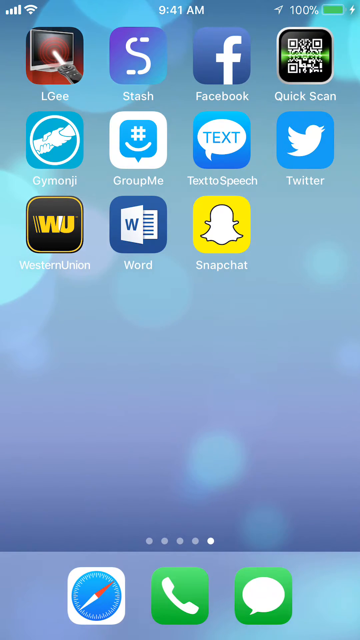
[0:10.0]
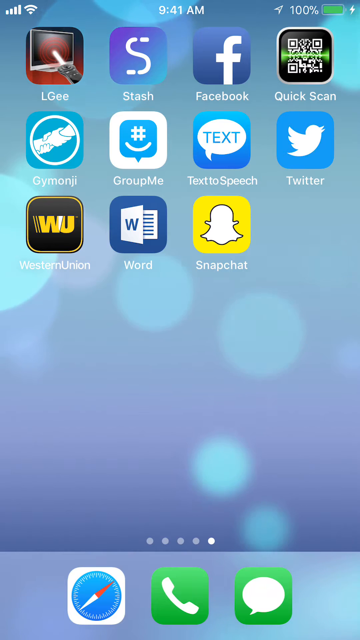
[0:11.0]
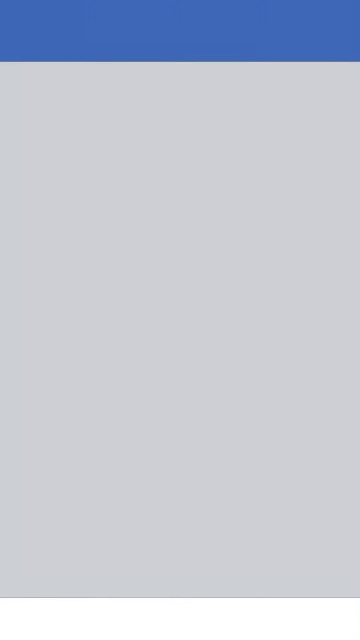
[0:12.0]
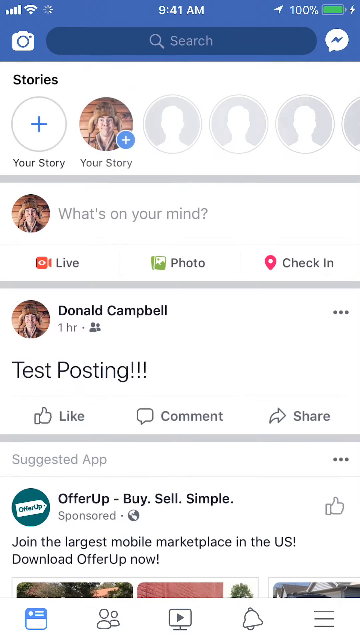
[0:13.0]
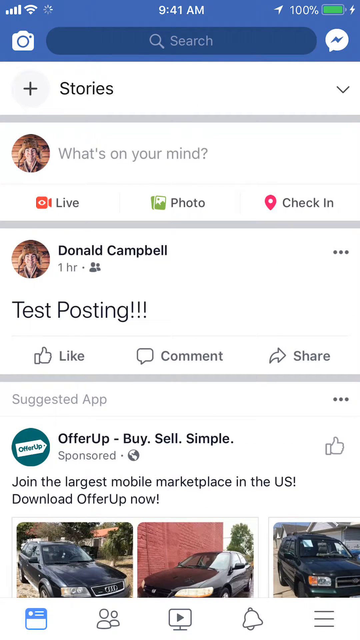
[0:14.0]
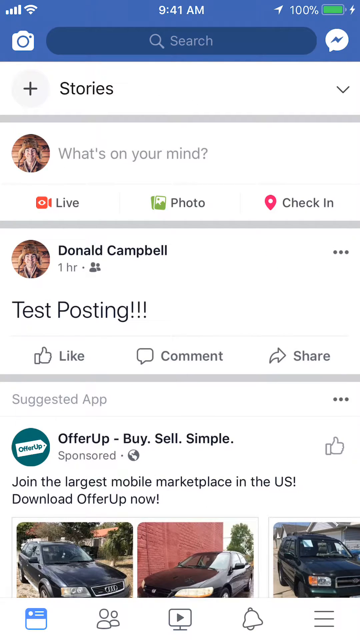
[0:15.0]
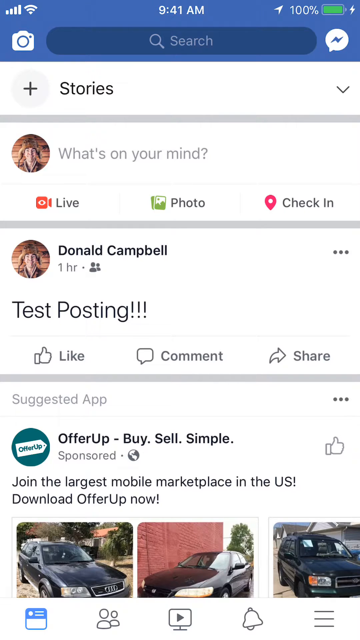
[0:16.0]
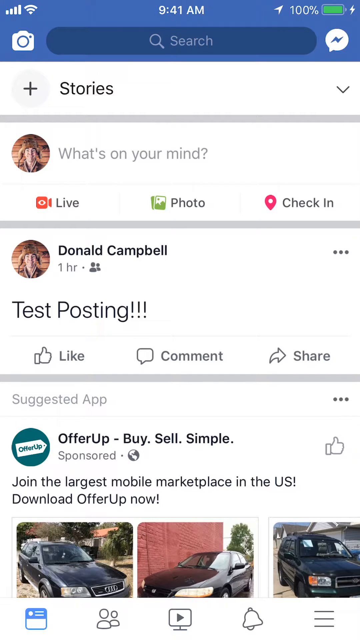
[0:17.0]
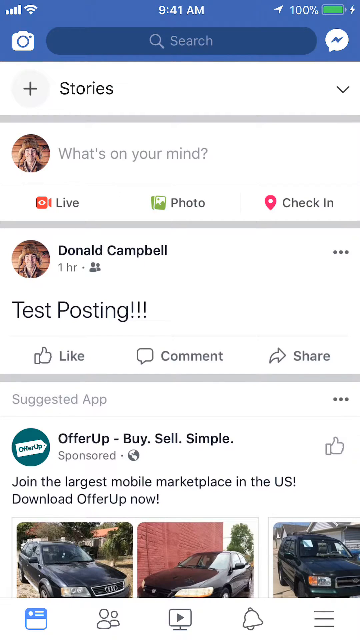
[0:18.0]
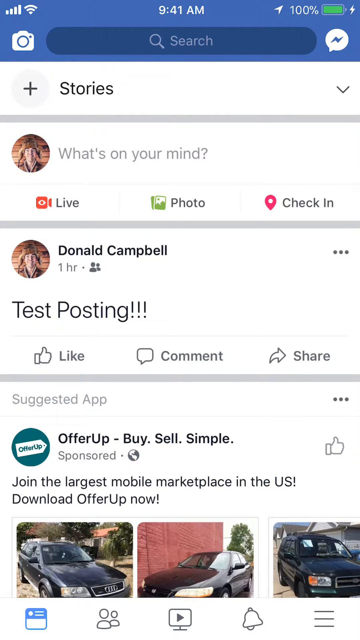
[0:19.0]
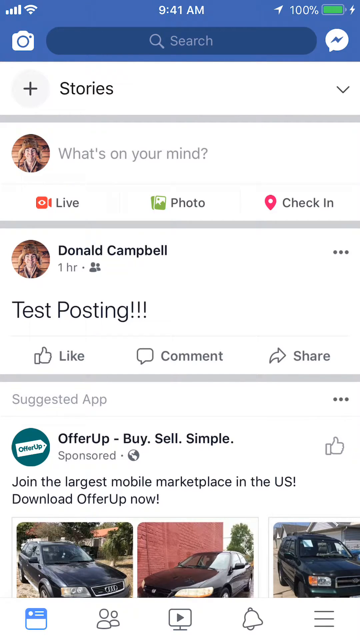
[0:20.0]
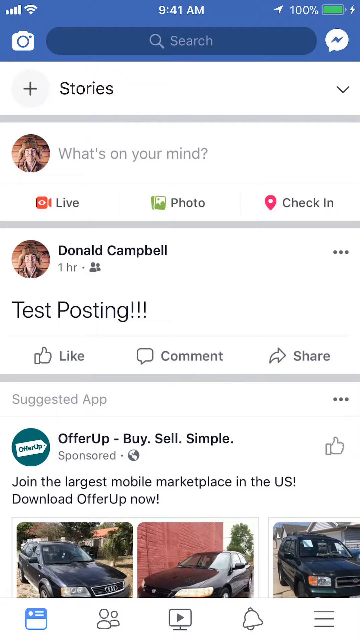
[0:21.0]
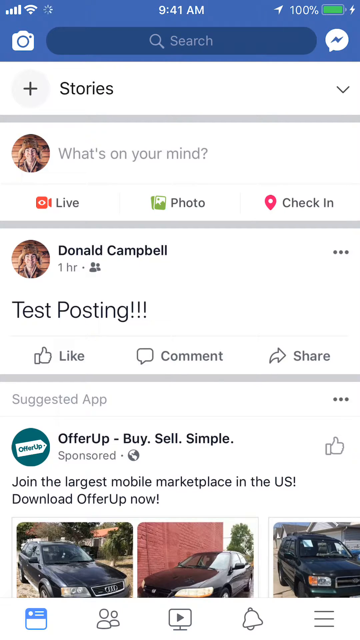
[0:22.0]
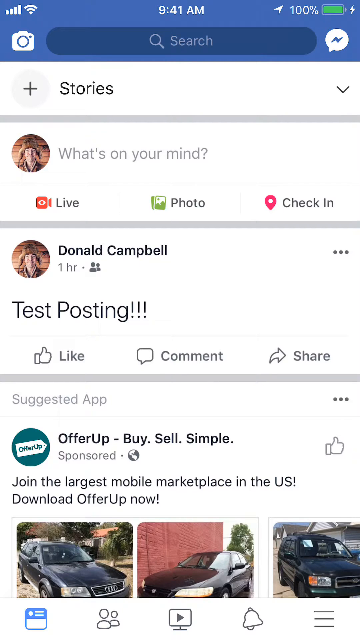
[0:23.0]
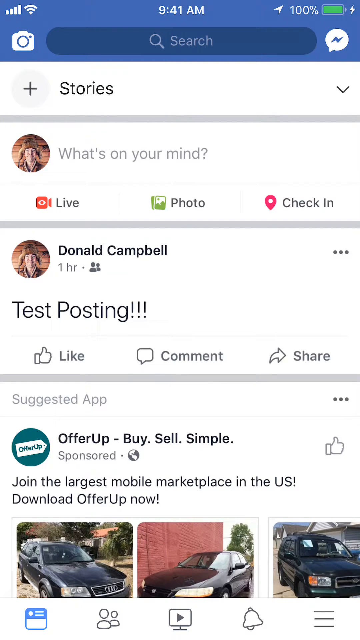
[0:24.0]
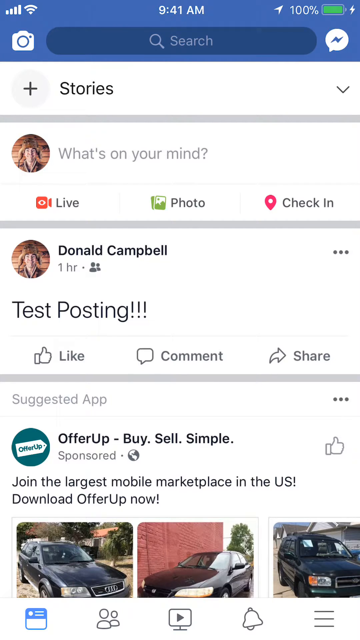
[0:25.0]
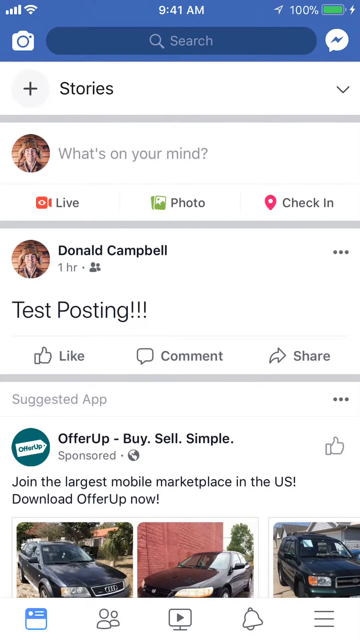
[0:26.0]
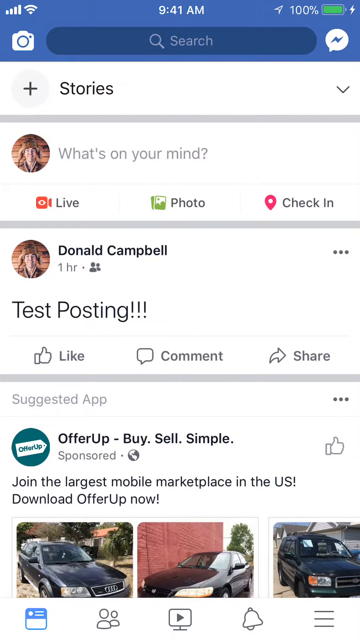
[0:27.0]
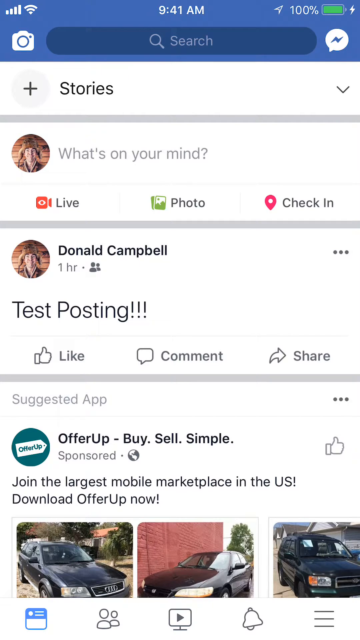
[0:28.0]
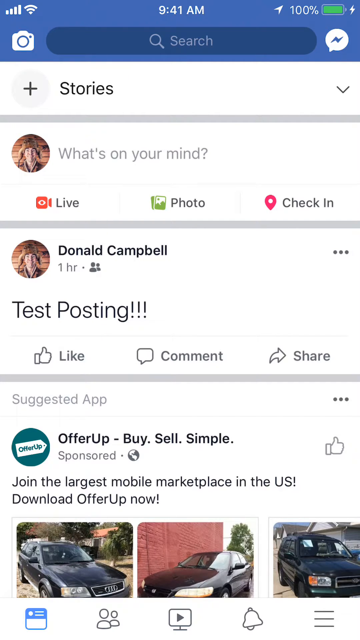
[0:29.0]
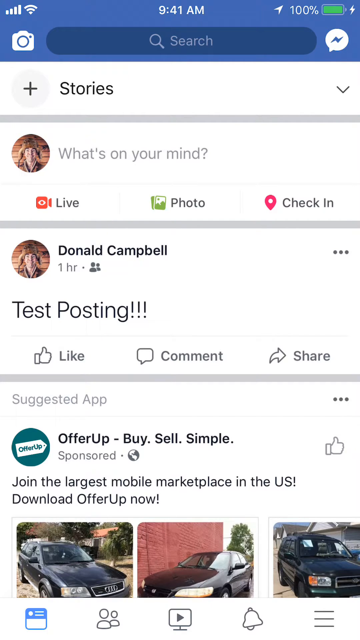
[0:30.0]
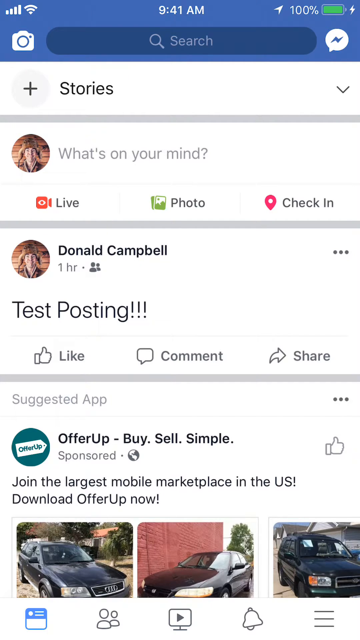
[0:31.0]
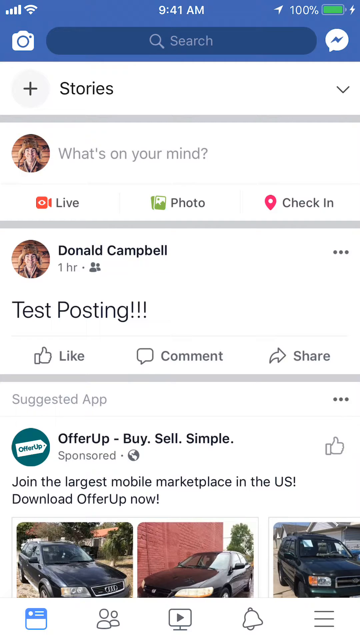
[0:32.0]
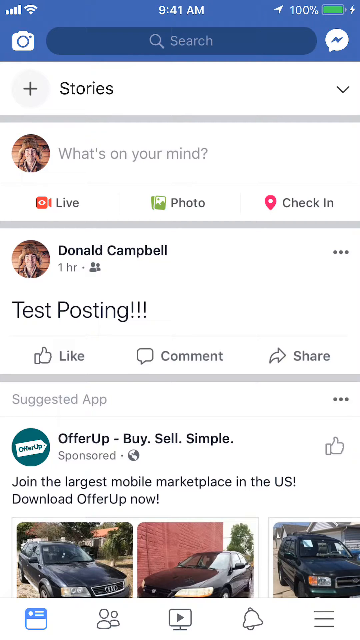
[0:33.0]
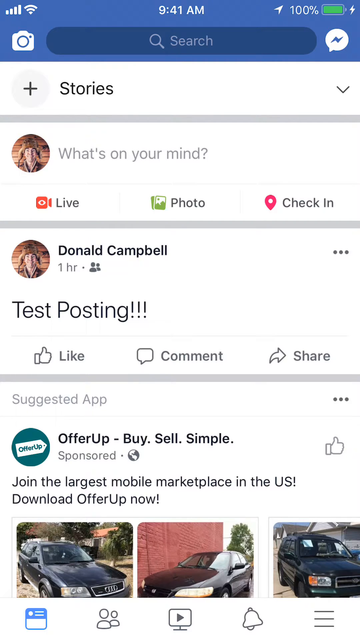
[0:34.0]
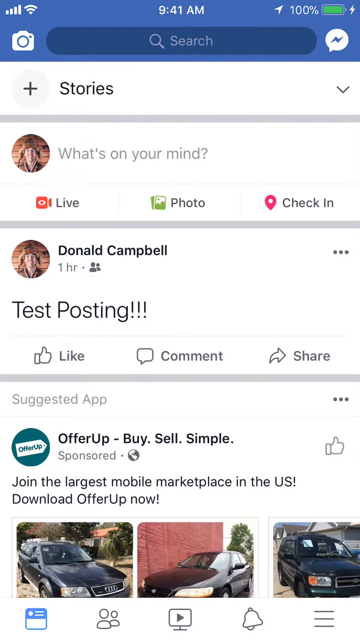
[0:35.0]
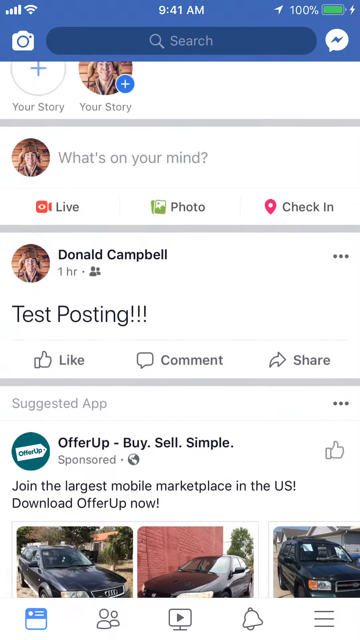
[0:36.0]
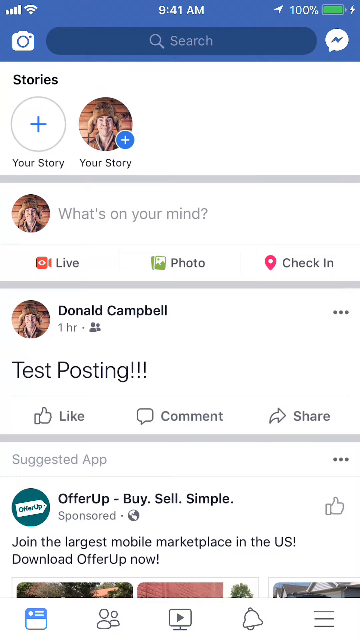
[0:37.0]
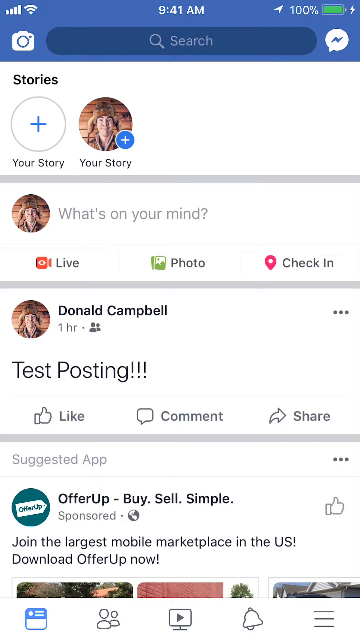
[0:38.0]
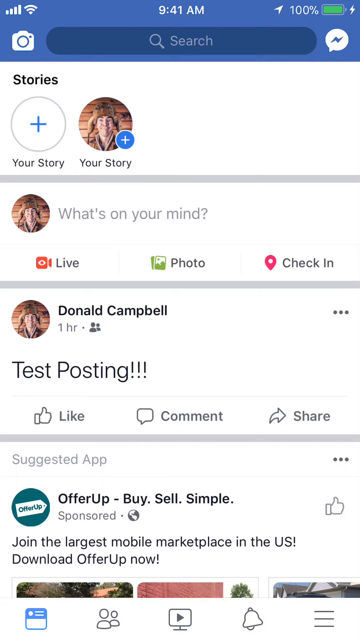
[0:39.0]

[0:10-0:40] The Facebook app is open on the phone. The time is 9:41 AM and the battery is at 100 percent. At the very top are the signal strength bars and the Wi-Fi icon. Below them is a camera icon for uploading pictures and videos, a search bar in the center, and the Facebook Messenger icon to the right. Underneath is a plus sign with "stories". Below that is the user's profile picture, next to which it says "what's on your mind". Under the profile picture is "live" with the Facebook Live icon, a red recording camera, then "photo" with a photo icon, and a location icon with "check-in". Underneath that is a post from Donald Campbell reading "test posting" with "one hour", followed by Donald's profile picture.